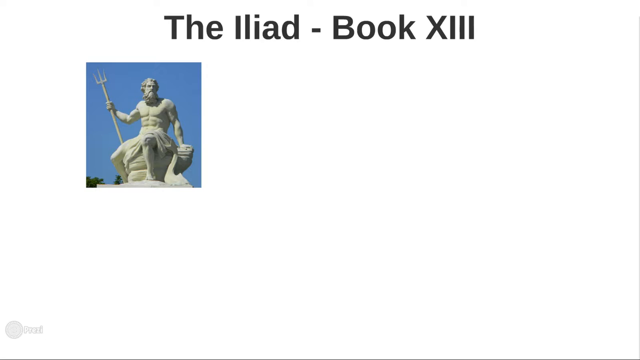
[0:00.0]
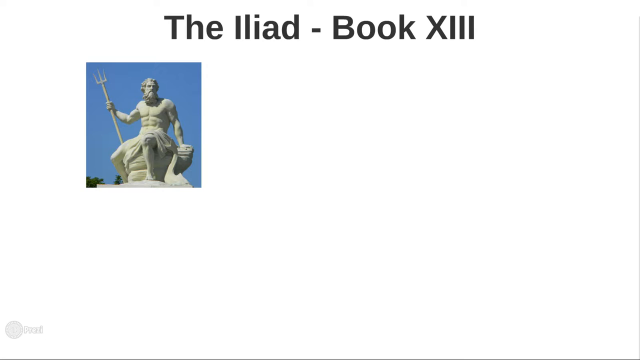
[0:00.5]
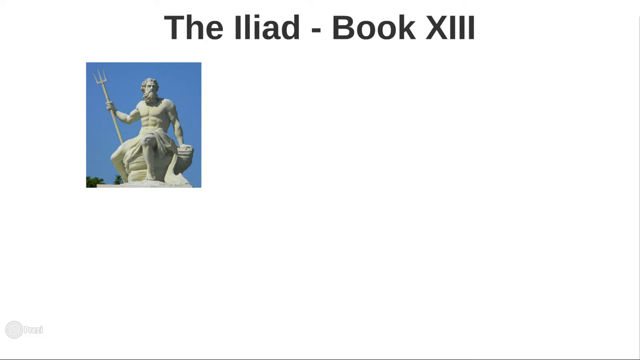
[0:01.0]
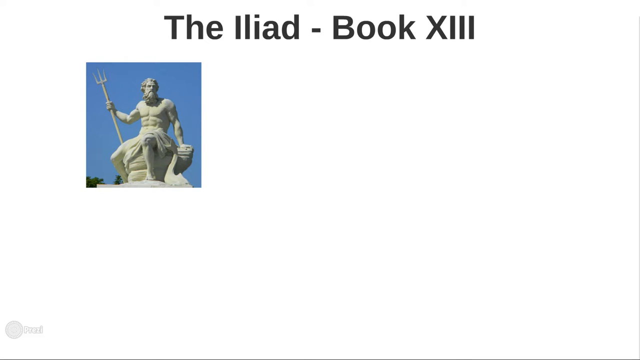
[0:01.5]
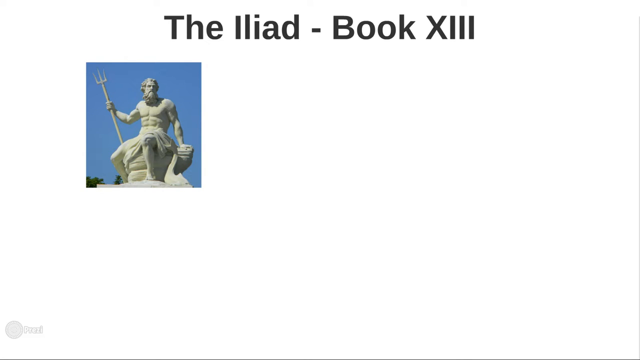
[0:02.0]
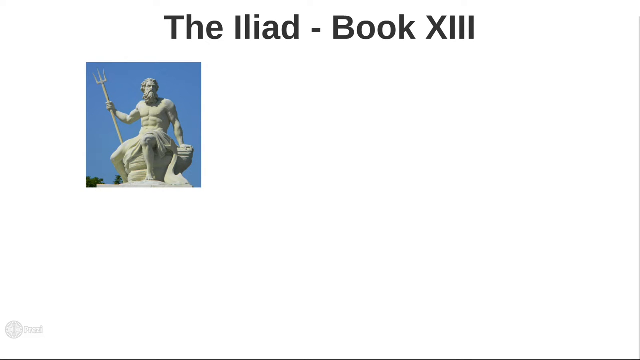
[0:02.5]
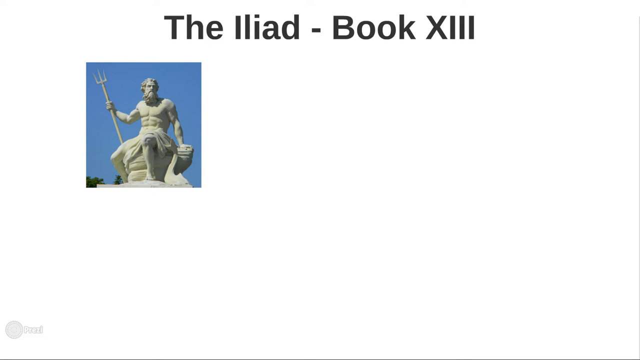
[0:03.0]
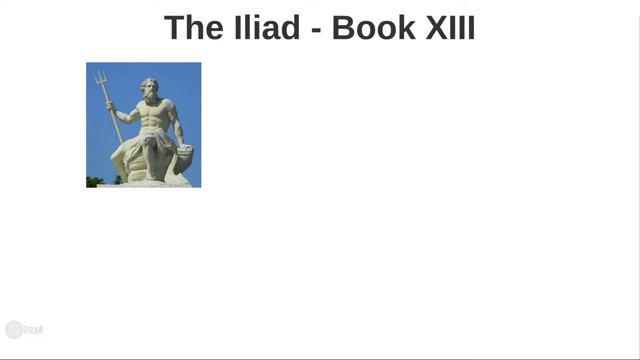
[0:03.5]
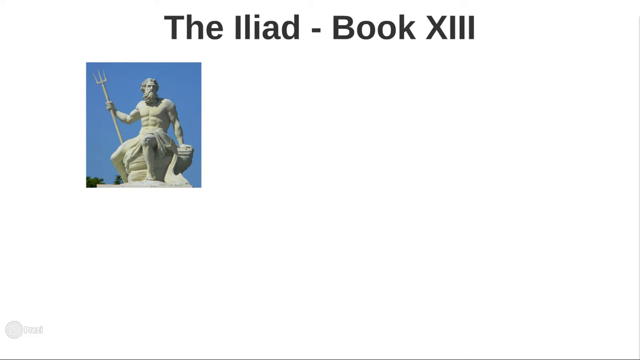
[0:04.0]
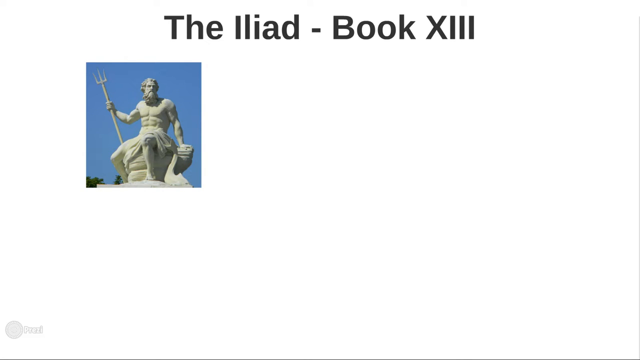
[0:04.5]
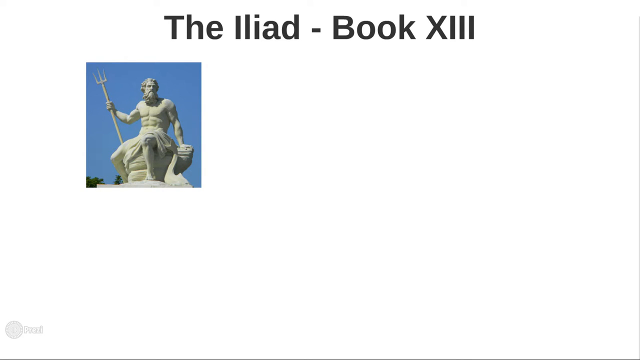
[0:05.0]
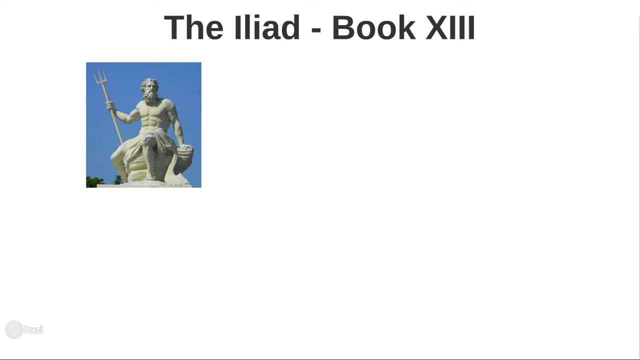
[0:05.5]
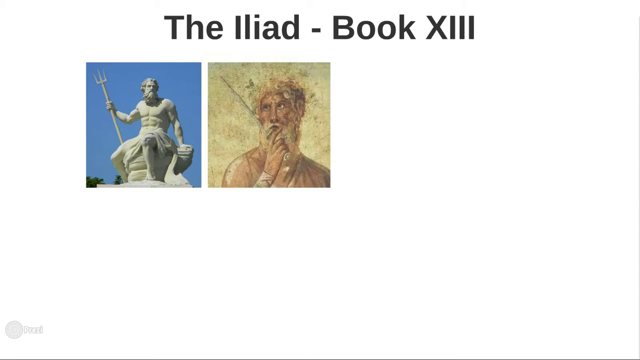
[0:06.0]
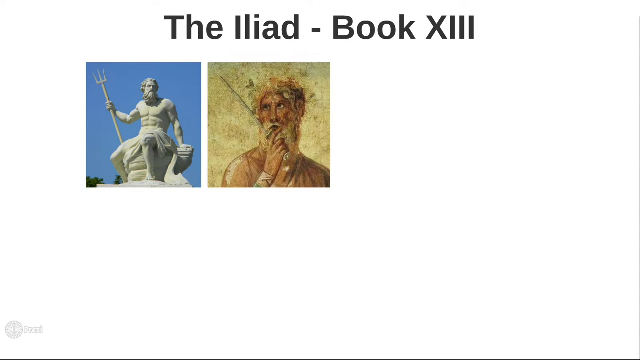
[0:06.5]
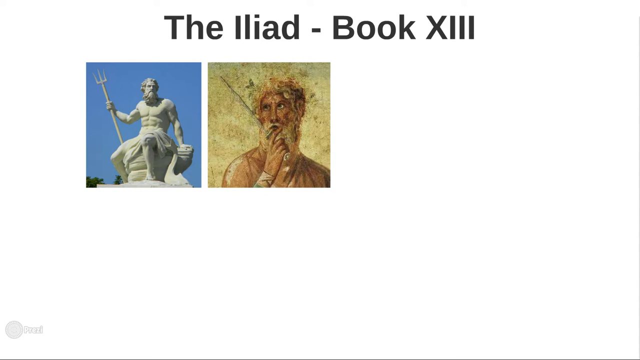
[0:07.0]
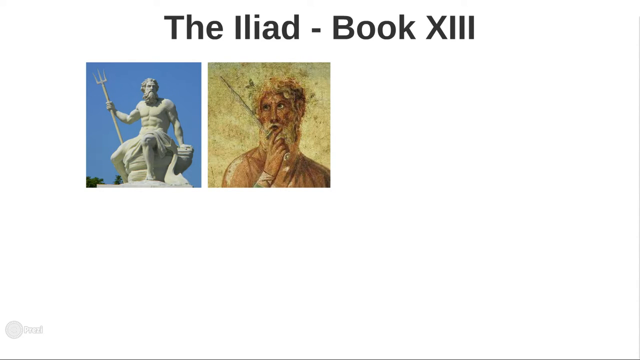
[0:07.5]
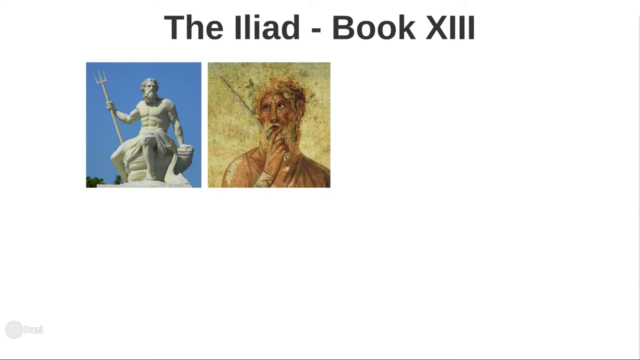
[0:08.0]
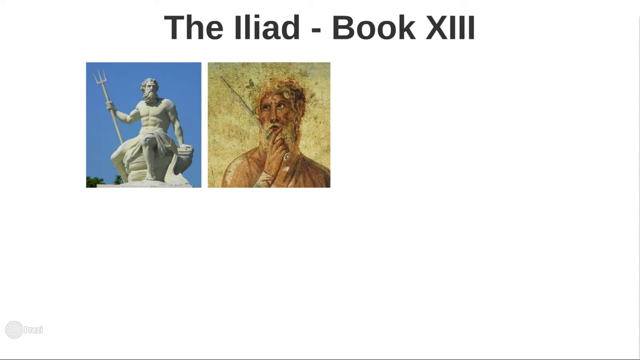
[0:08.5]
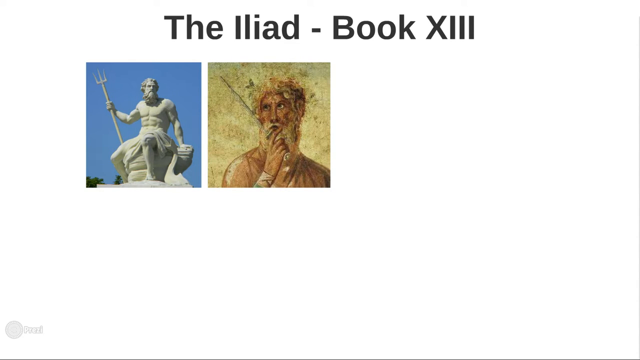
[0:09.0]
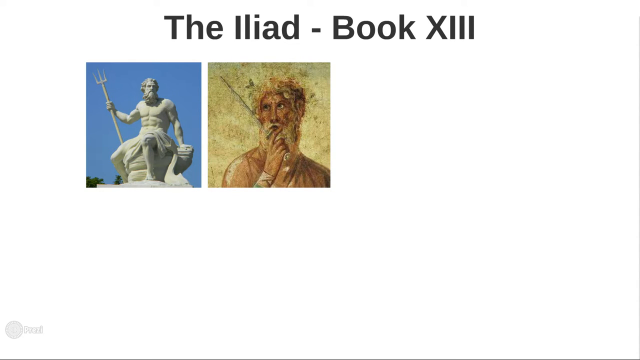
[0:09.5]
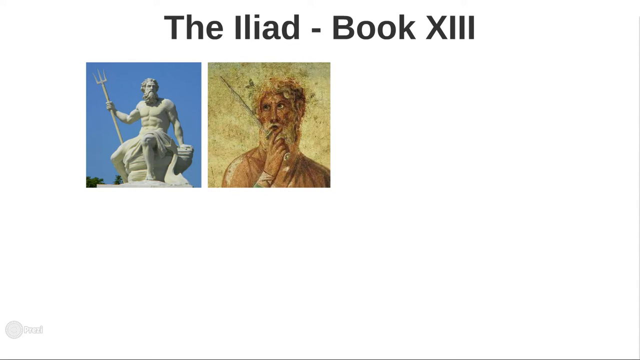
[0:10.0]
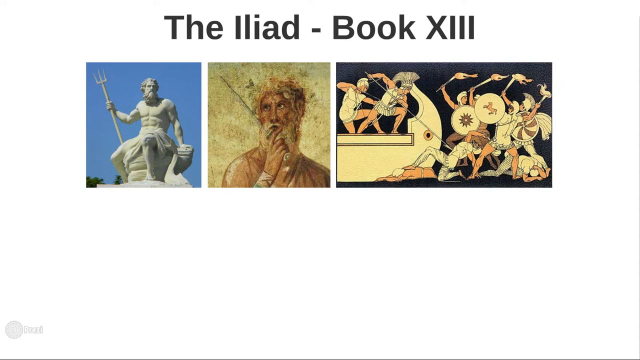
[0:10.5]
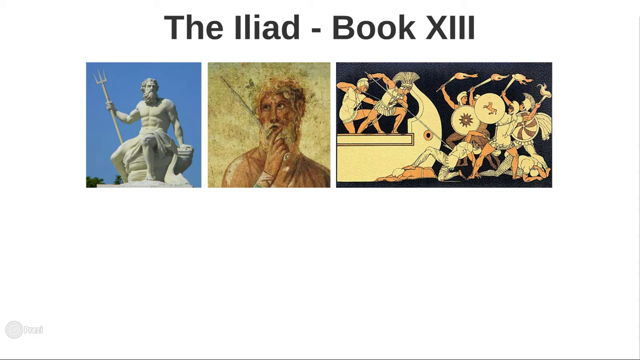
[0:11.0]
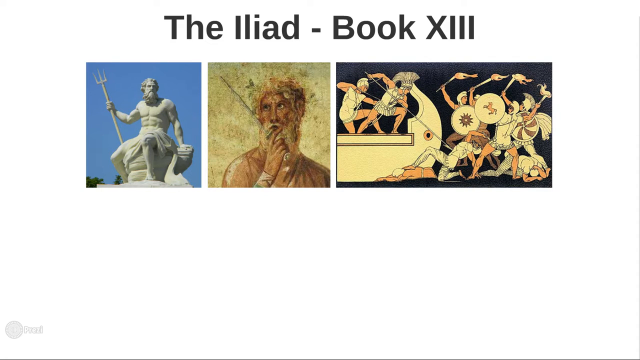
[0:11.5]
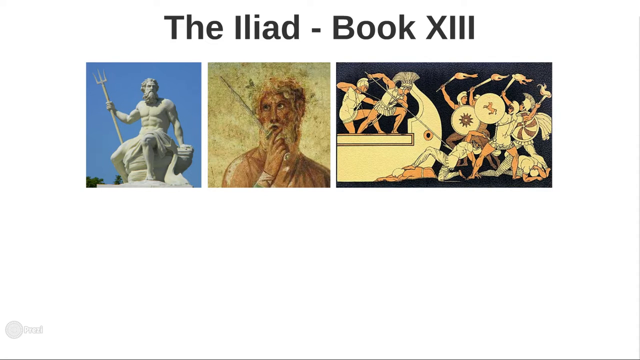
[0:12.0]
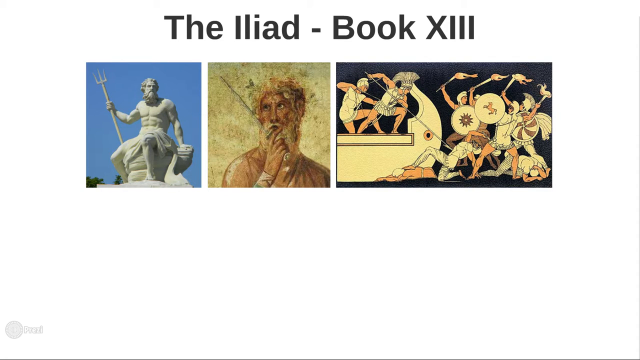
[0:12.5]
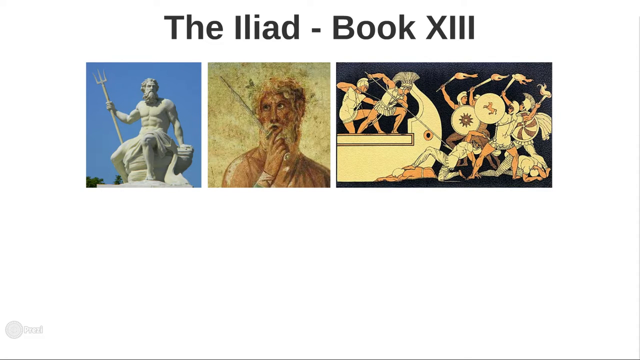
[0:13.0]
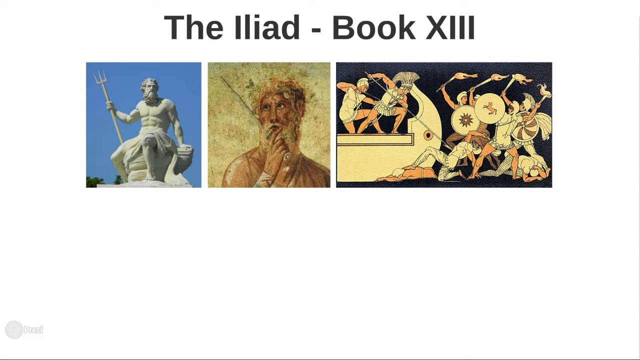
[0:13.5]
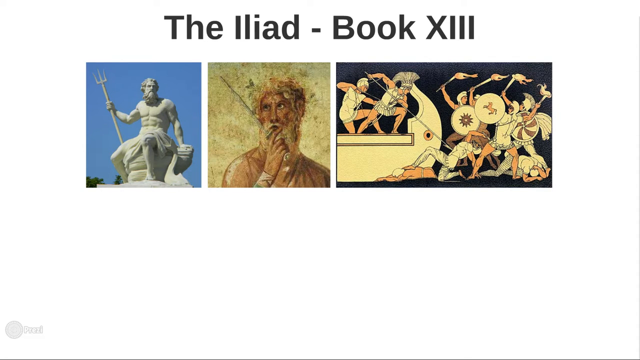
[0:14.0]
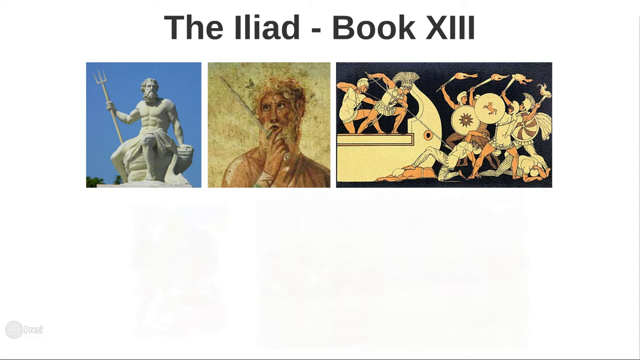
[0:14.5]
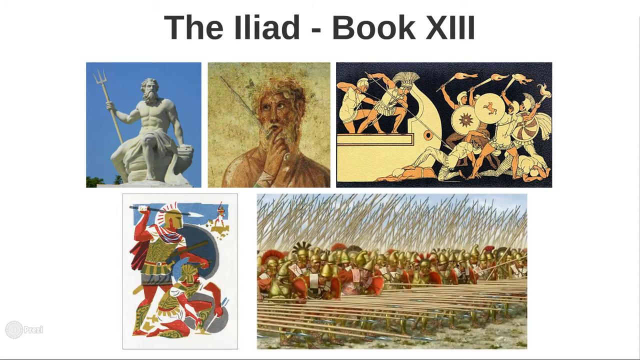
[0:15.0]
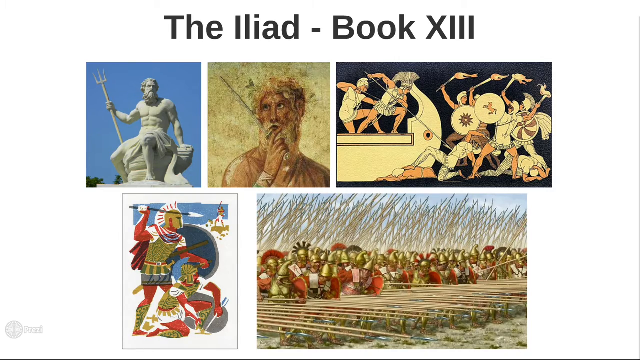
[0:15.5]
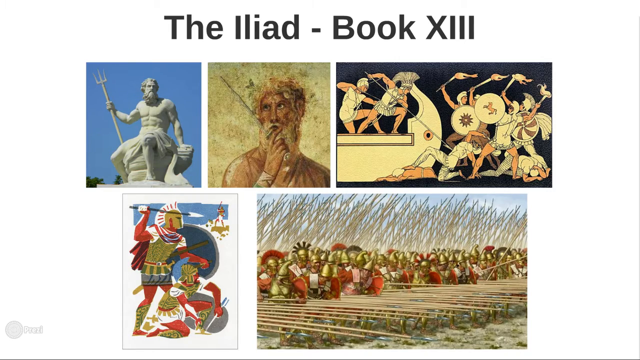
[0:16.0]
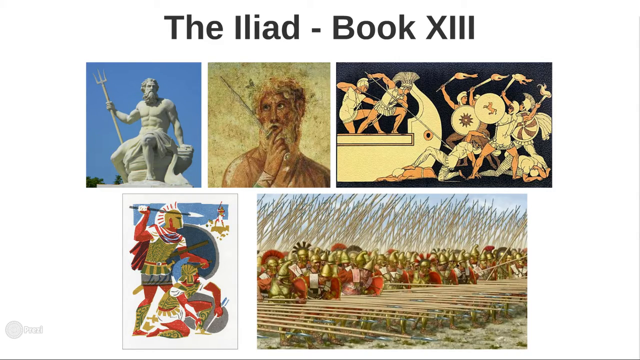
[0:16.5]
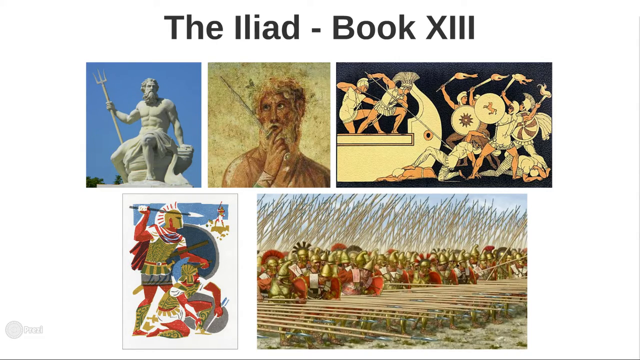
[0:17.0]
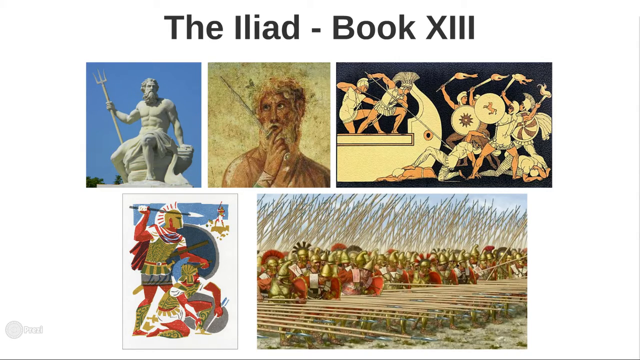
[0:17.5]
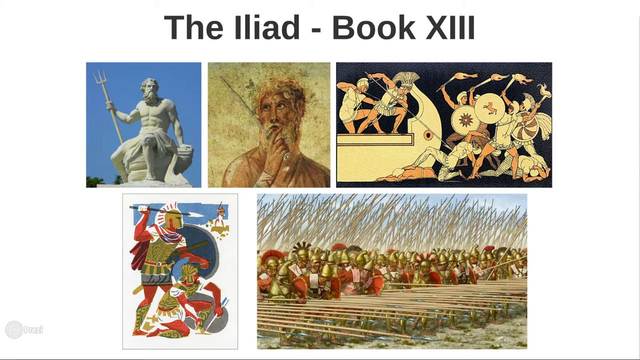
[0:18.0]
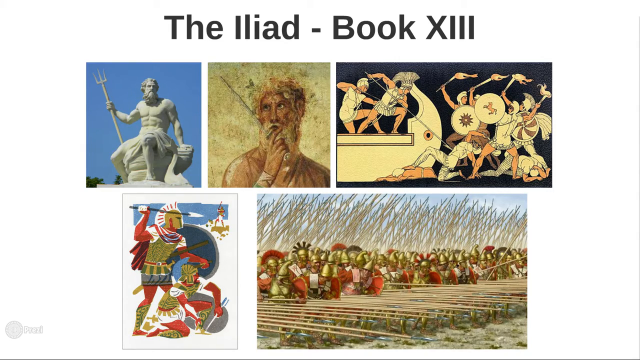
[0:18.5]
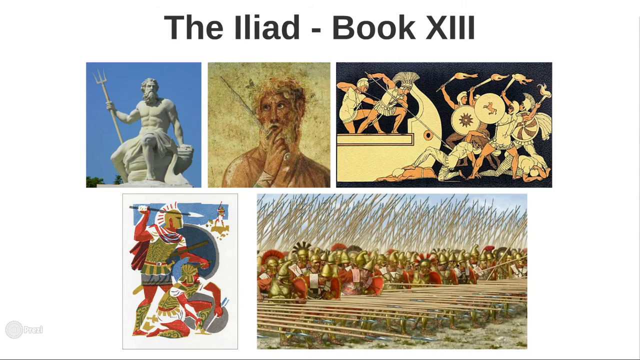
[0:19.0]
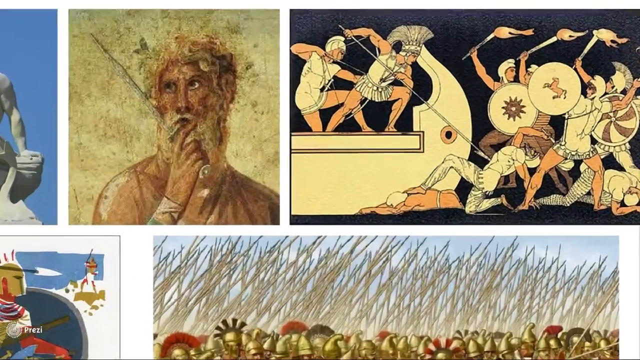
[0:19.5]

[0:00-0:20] The video opens on a white screen with black text at the very top reading "the Iliad - book x111". A small picture appears slightly left of the middle, showing a white marble statue of a very in-shape man with curly hair sitting on a stump, wearing what looks to be only a robe across his middle section and holding what looks like a pitchfork. The sky behind him is blue, and a hint of trees at the very bottom suggests the statue is up pretty high. Another picture appears to the right of the first, showing a man with brown skin and blonde hair. A third picture appears, showing what appears to be some type of war, with people in a boat killing people who are not in the boat. Below the images, a picture appears showing two fighting scenes in which the fighters seem to have arrows and spears in their hands.